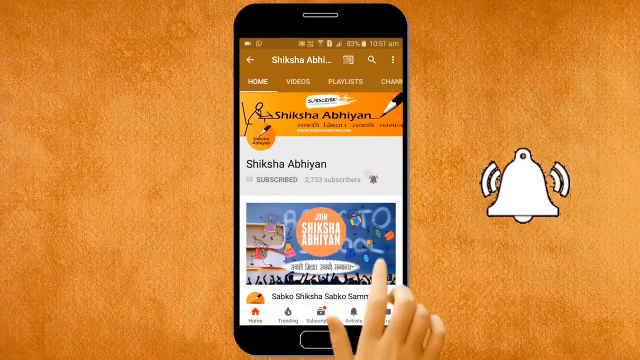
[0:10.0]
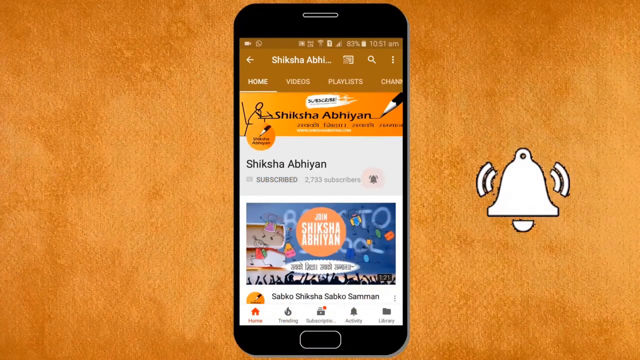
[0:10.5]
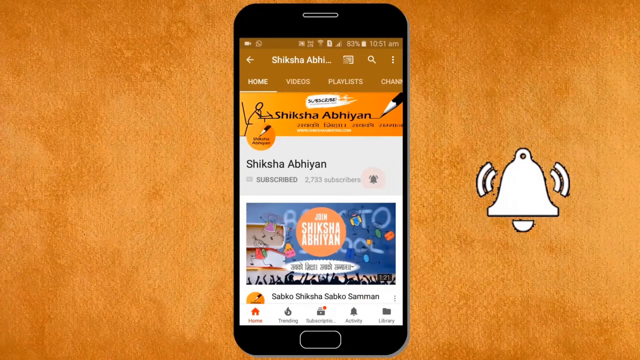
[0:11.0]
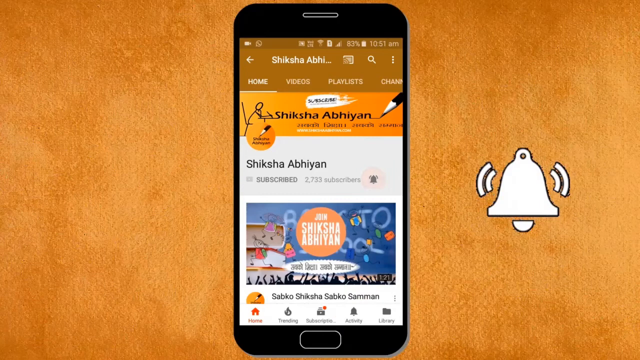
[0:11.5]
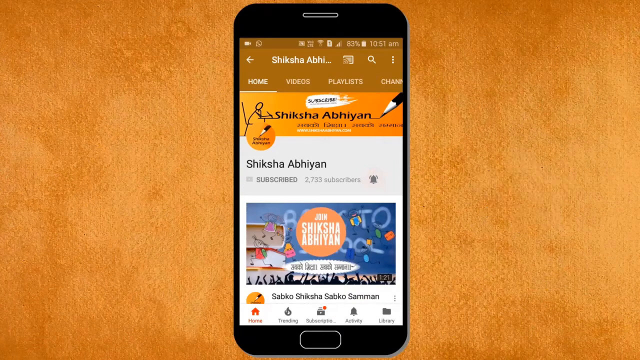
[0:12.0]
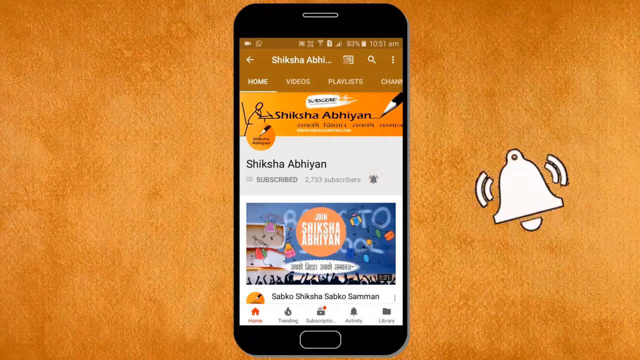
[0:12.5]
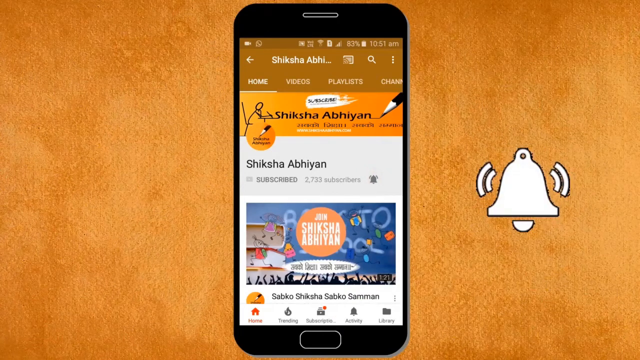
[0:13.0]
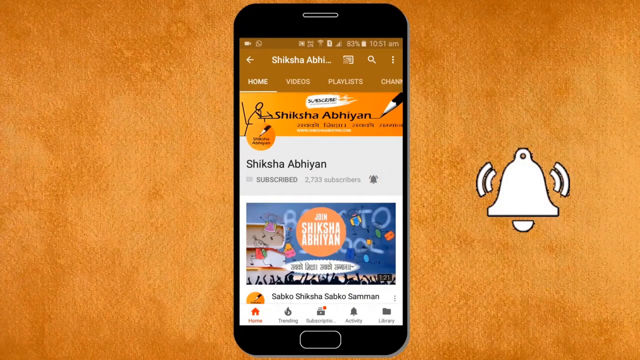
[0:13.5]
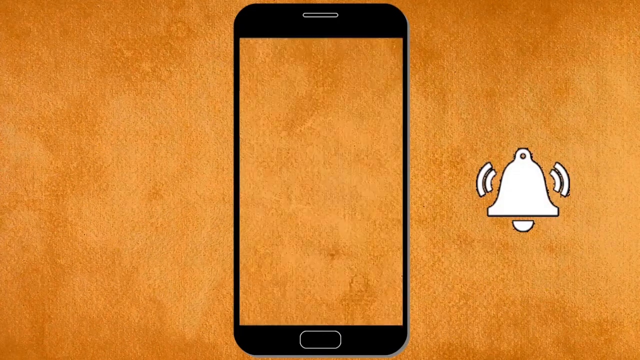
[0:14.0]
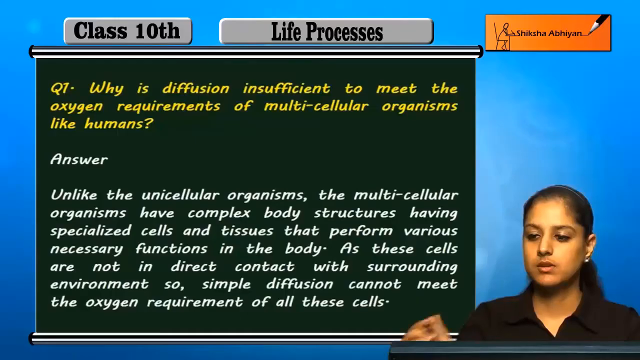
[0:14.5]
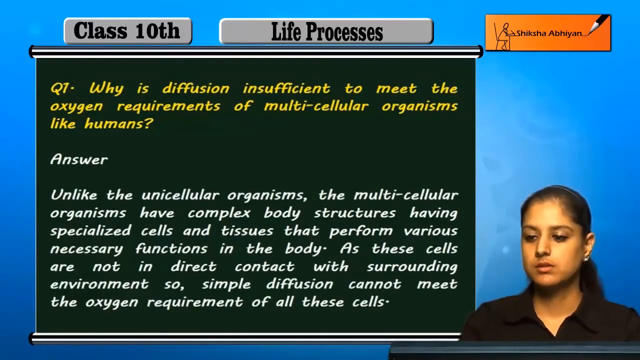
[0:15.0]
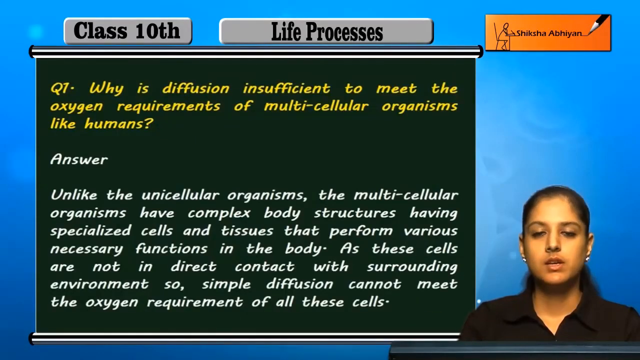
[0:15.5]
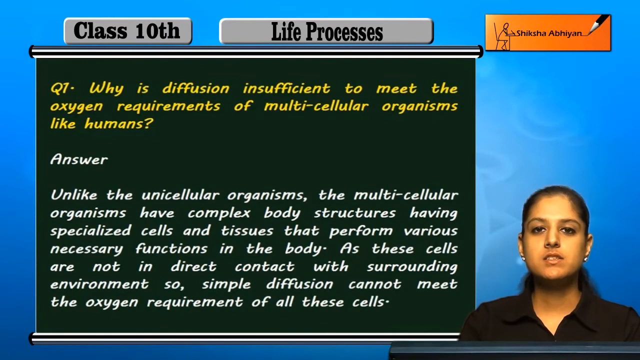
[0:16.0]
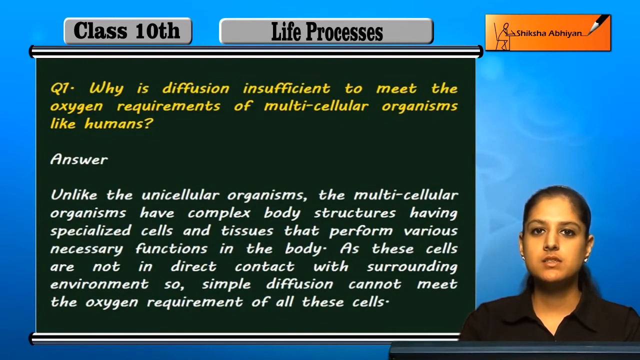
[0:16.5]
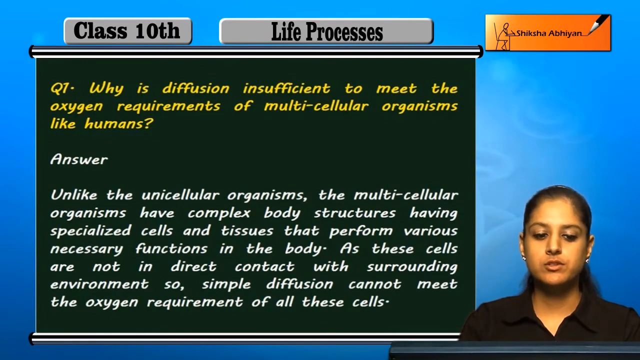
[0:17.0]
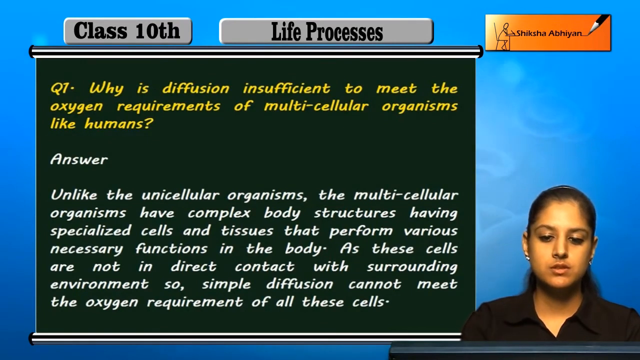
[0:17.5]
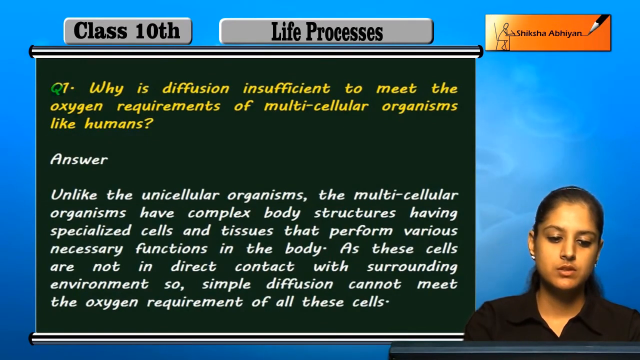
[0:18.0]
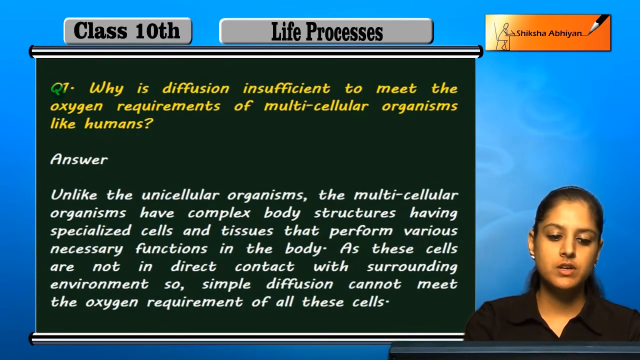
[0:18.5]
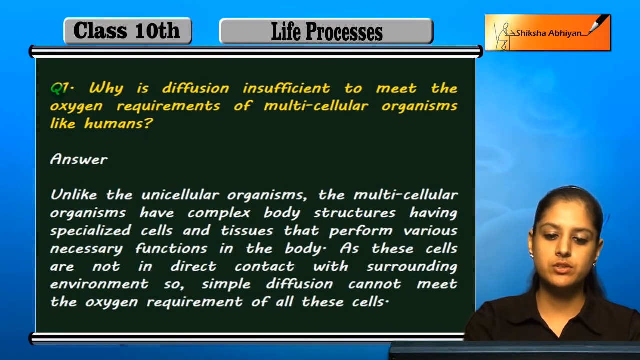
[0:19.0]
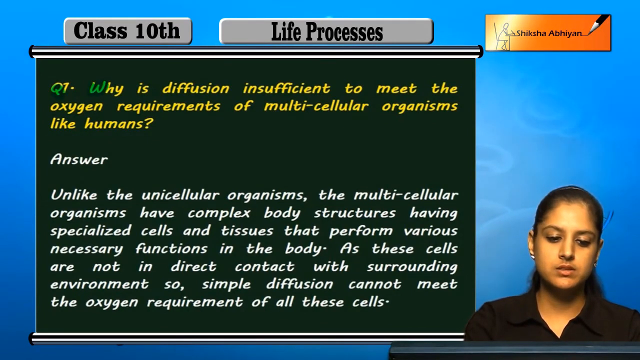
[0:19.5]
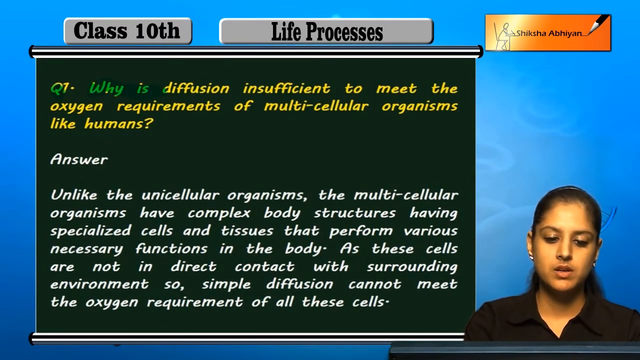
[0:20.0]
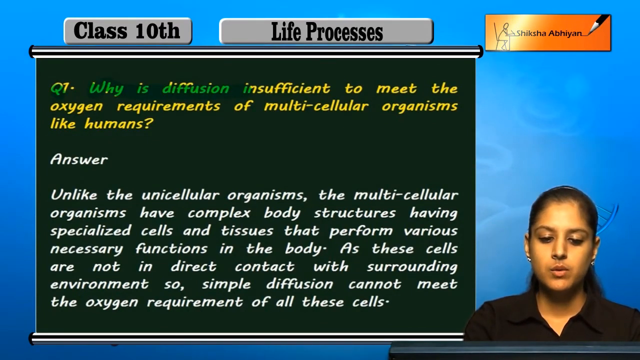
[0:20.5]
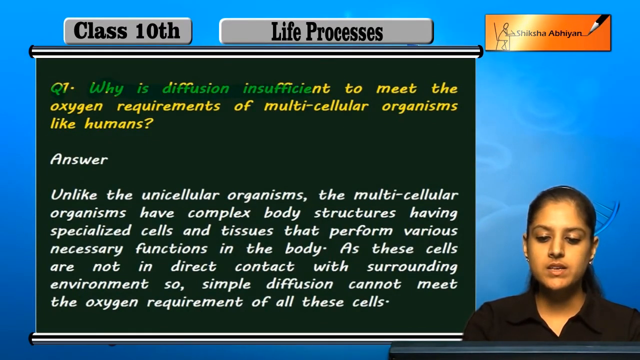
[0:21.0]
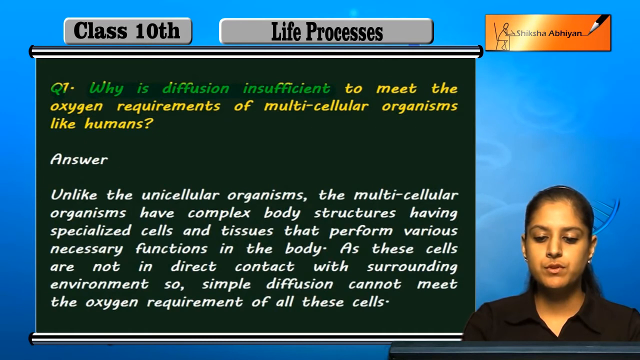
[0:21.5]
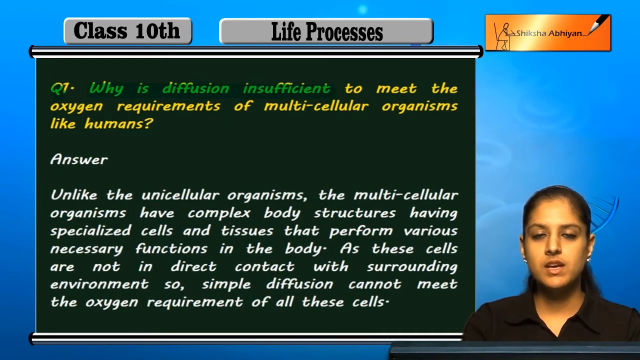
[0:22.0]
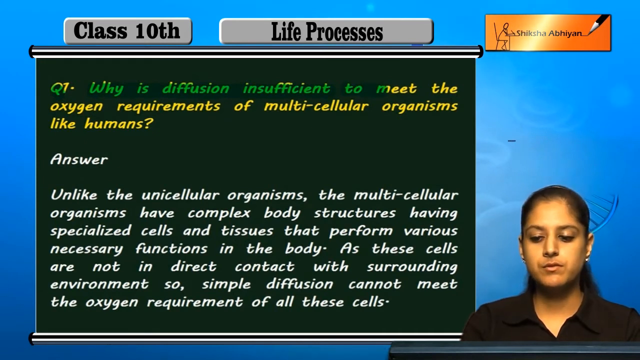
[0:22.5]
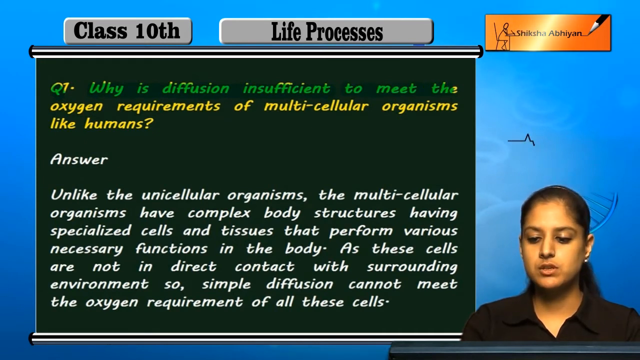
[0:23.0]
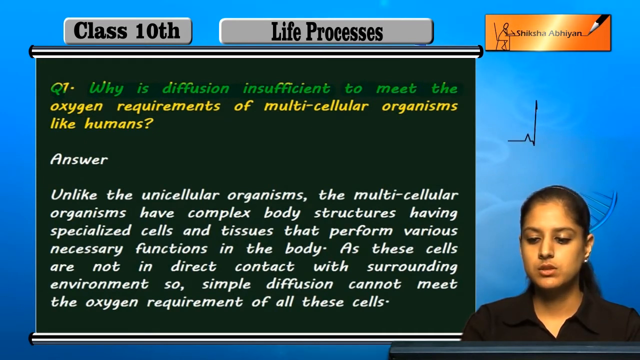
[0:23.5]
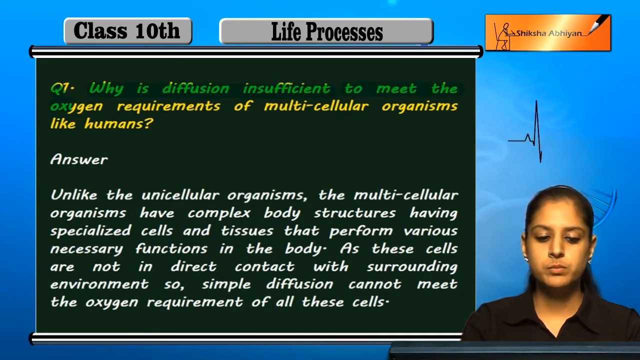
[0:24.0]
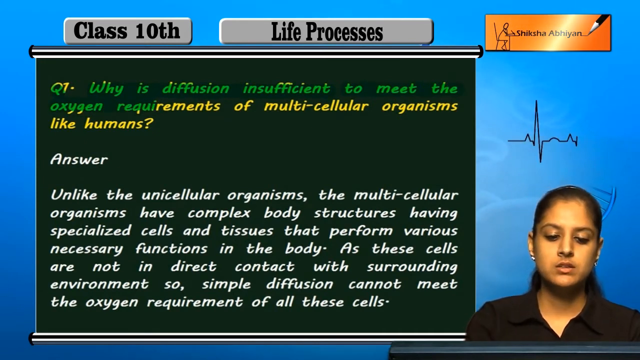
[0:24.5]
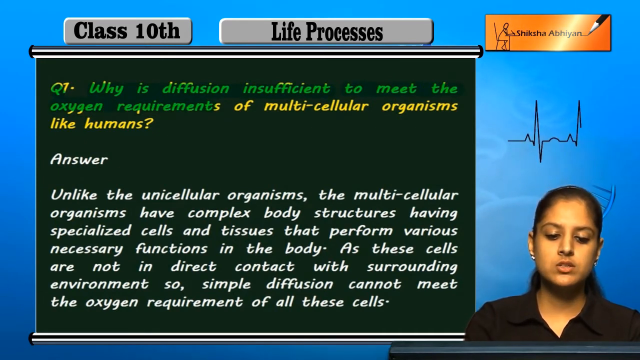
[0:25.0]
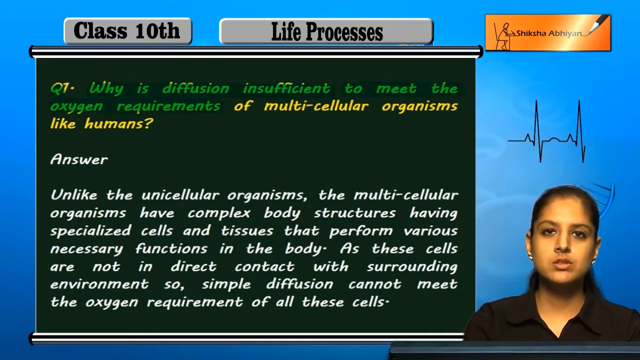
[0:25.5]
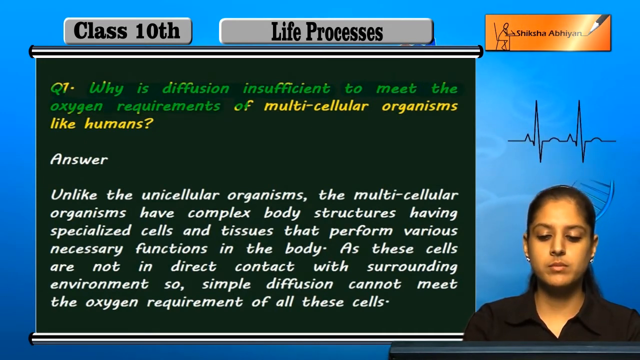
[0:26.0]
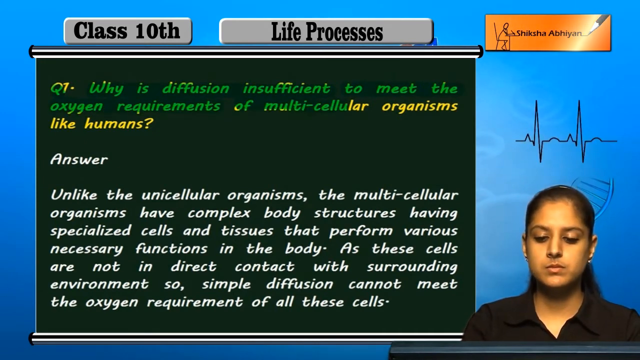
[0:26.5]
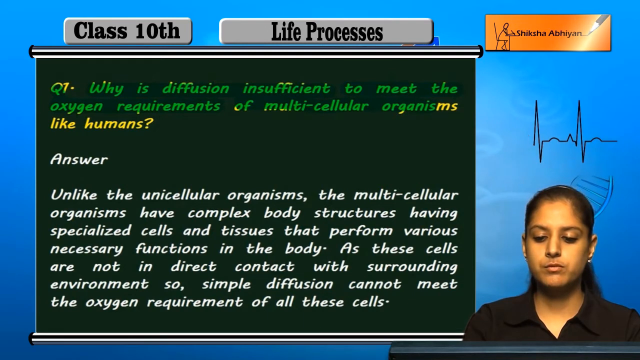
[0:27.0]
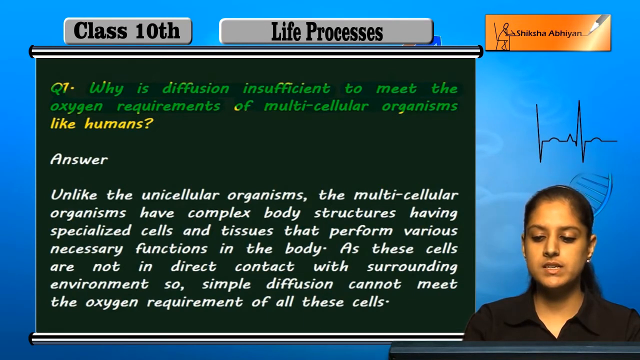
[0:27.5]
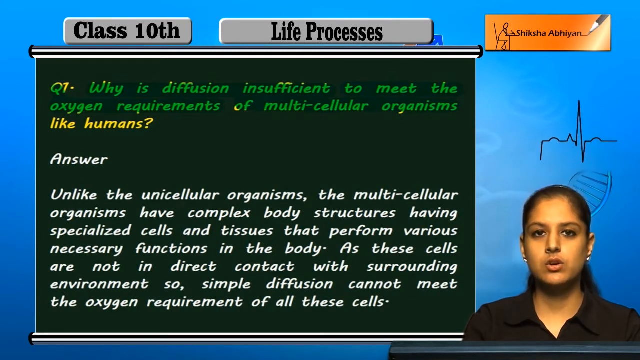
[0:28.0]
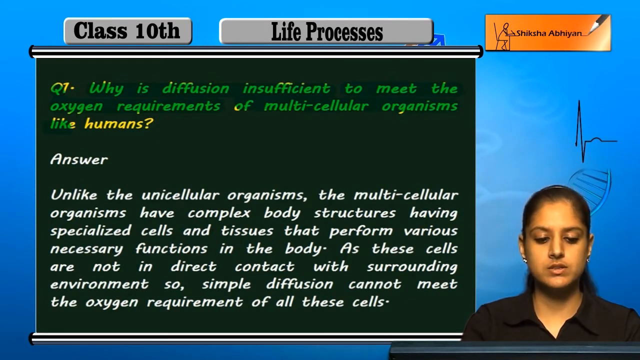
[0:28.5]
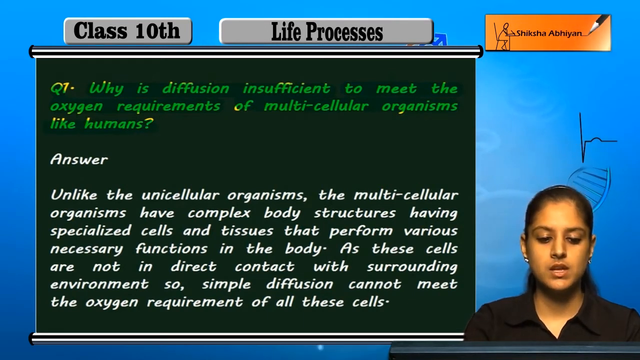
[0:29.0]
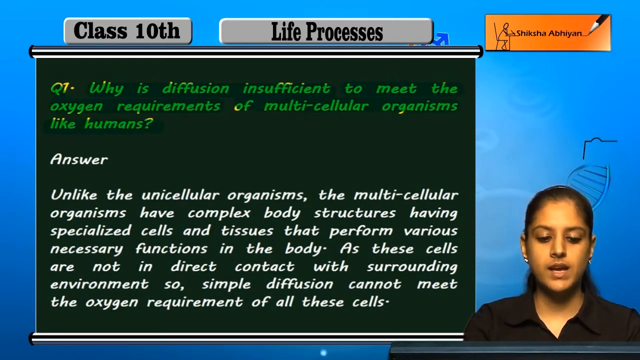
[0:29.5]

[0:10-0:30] The screen is filled with text in what looks like an instructional video. At the top it reads "Class 10th Life Process," followed by "Q1. Why is diffusion insufficient to meet the oxygen requirements of multicellular organisms like humans?" Below that is the answer: "Answer. Unlike the unicellular organisms, the multicellular organisms have complex body structures, having specialized cells and tissues that perform various necessary functions in the body. As these cells are not in the direct contact with the surrounding environment, so simple diffusion cannot meet the oxygen requirements of all these cells." In the upper left it says "Class 10." In the lower right of the screen is a person who looks like an instructor, reading the question and the answer.